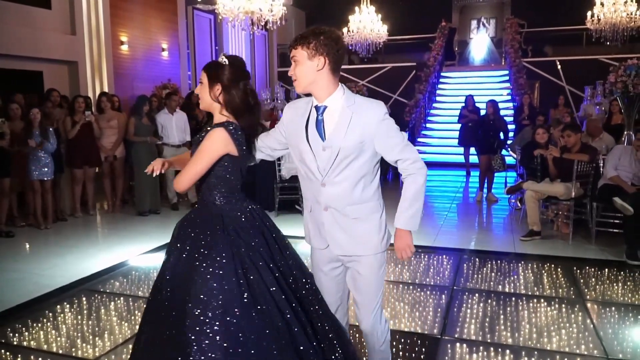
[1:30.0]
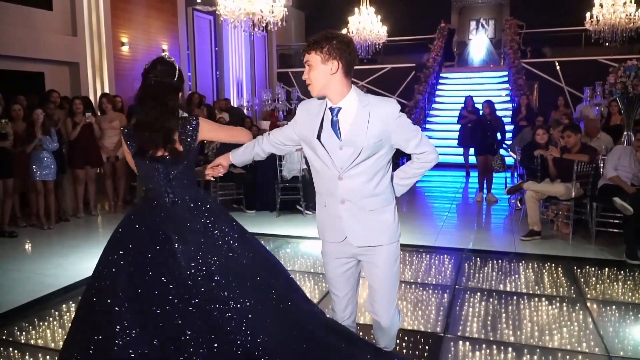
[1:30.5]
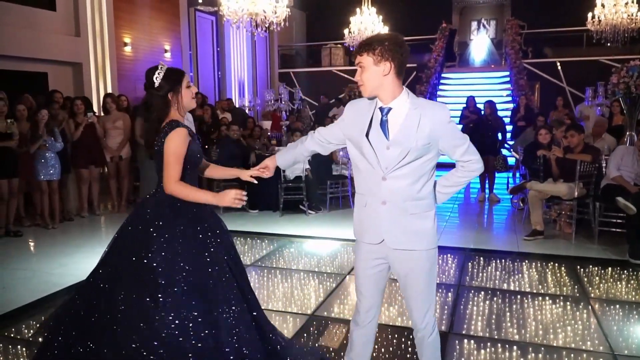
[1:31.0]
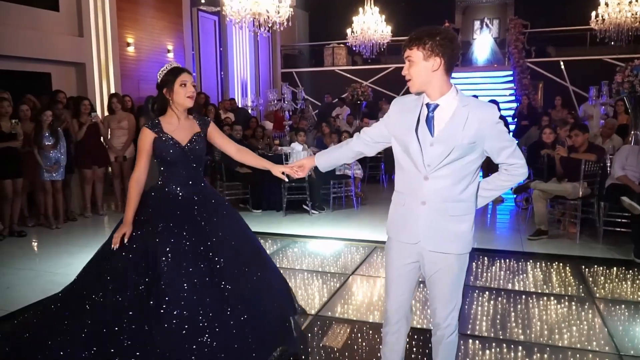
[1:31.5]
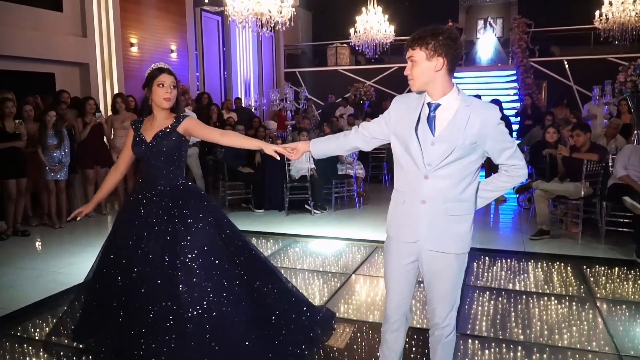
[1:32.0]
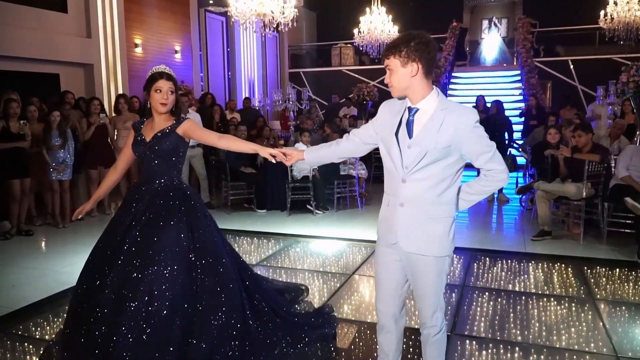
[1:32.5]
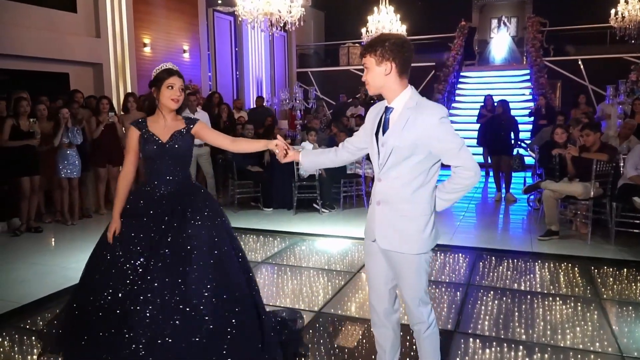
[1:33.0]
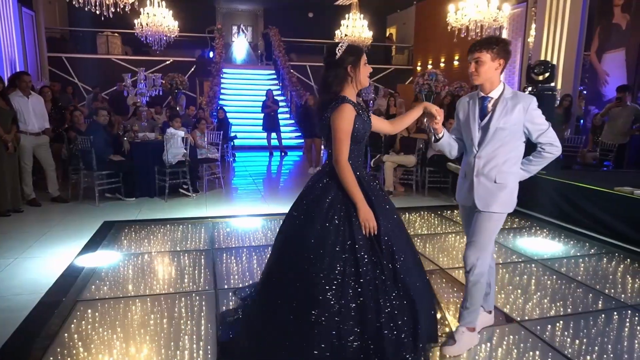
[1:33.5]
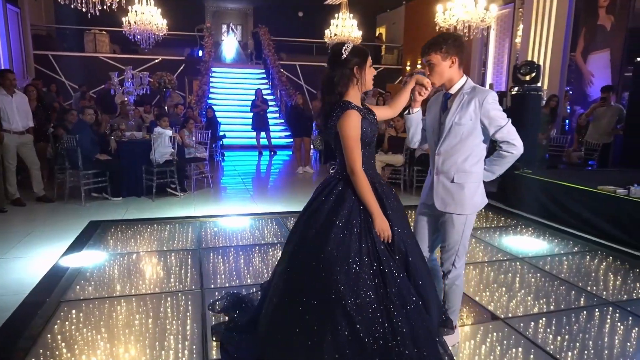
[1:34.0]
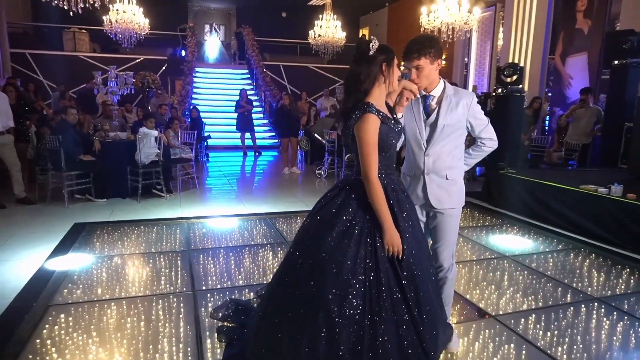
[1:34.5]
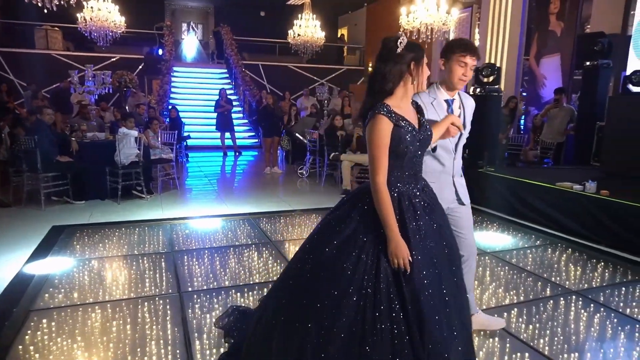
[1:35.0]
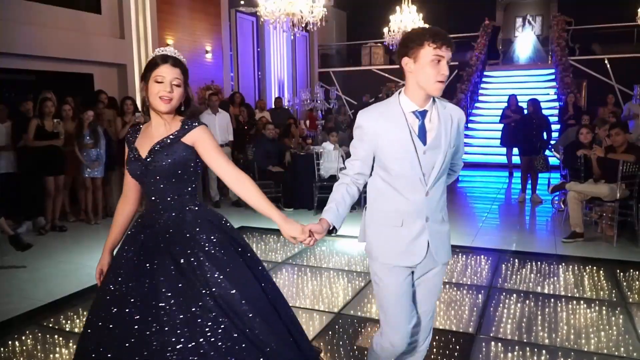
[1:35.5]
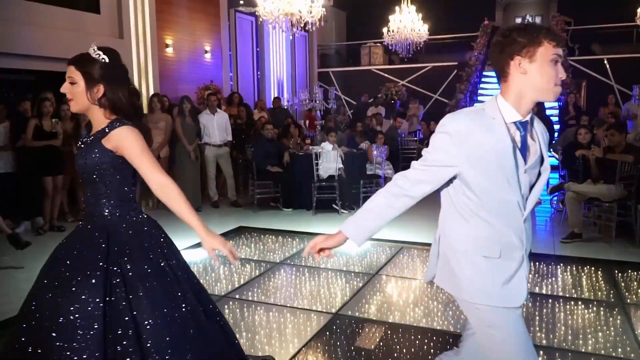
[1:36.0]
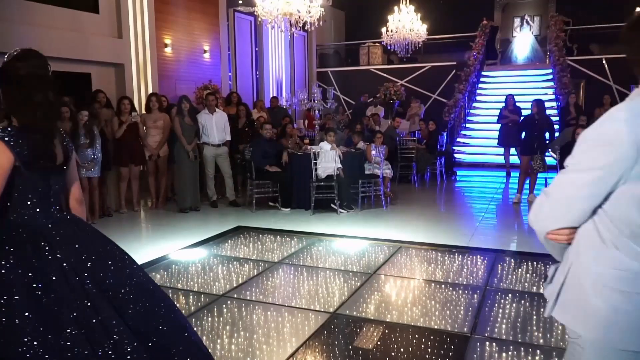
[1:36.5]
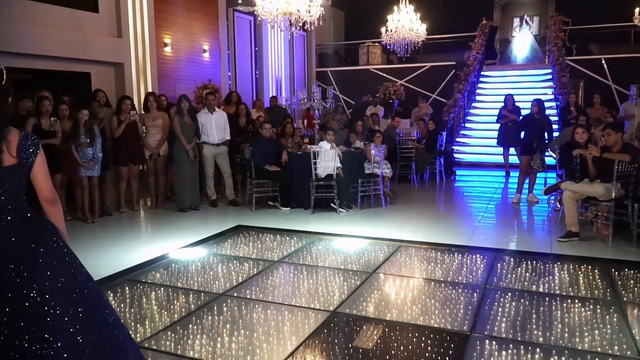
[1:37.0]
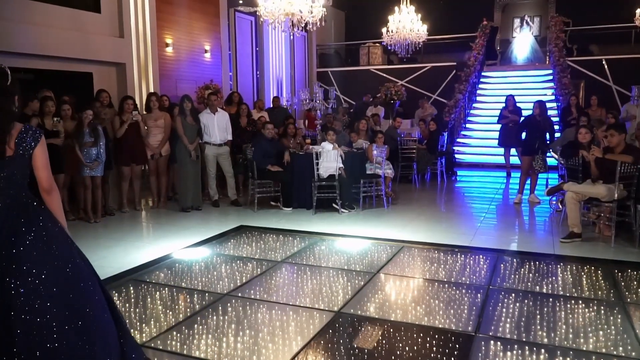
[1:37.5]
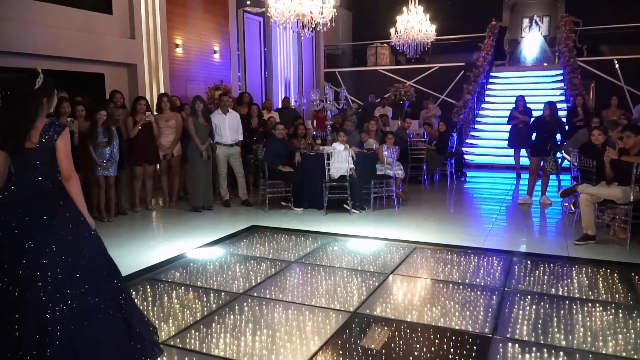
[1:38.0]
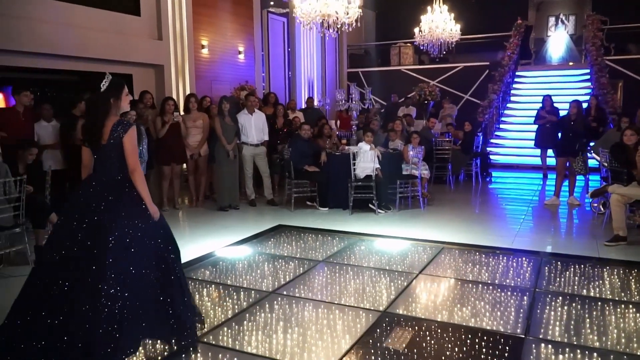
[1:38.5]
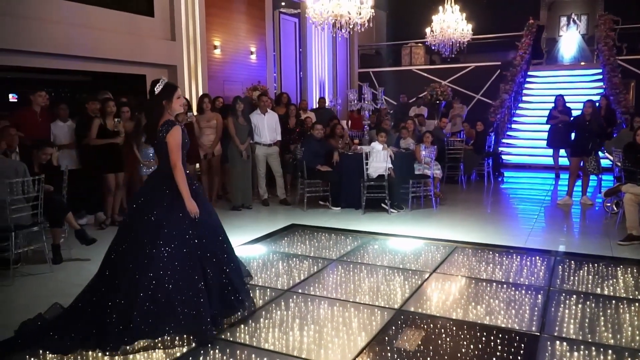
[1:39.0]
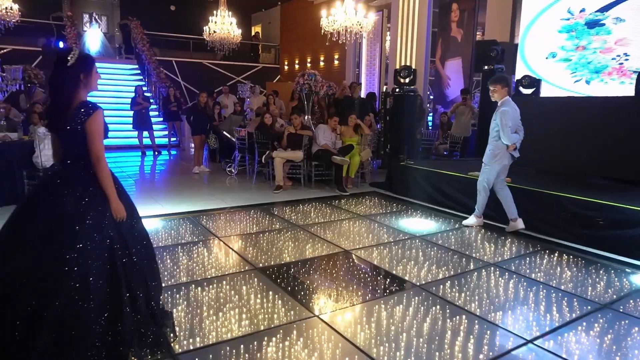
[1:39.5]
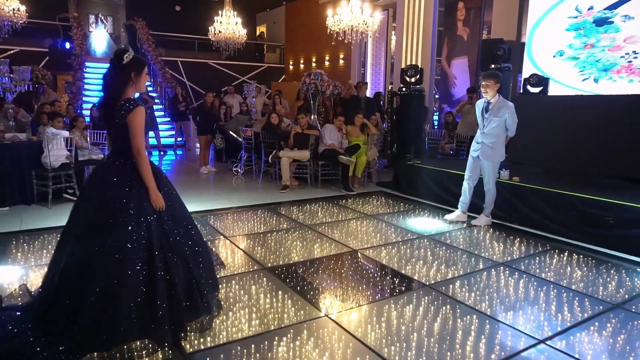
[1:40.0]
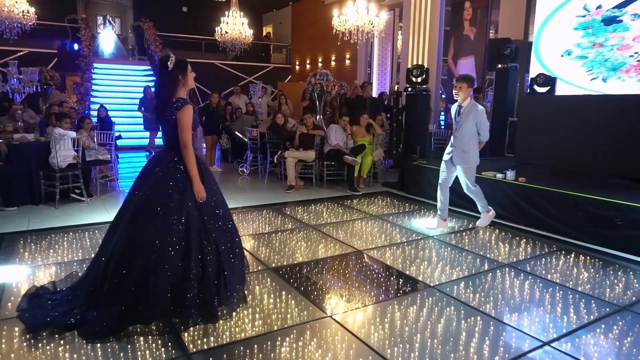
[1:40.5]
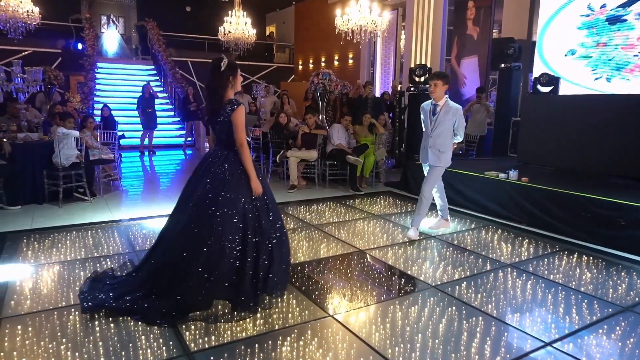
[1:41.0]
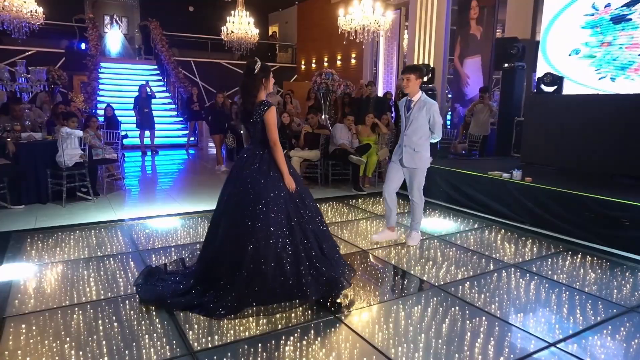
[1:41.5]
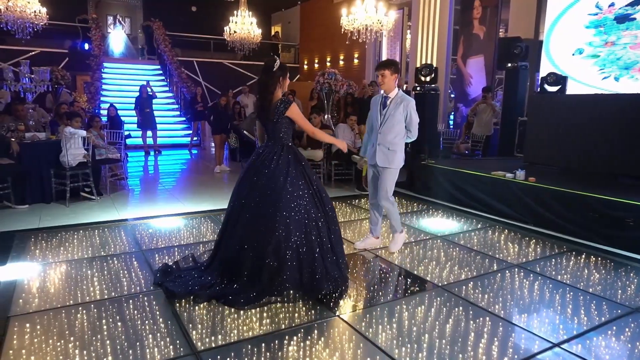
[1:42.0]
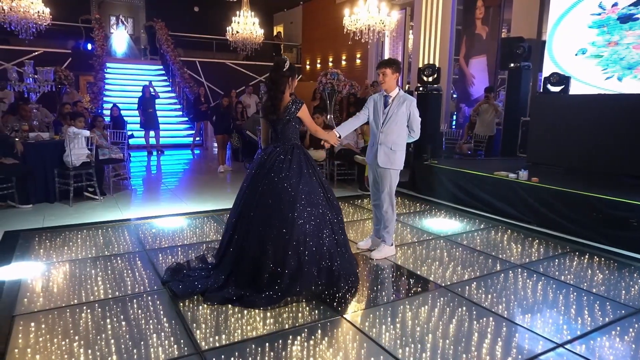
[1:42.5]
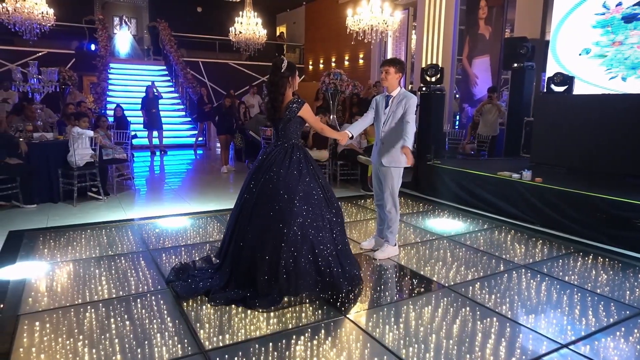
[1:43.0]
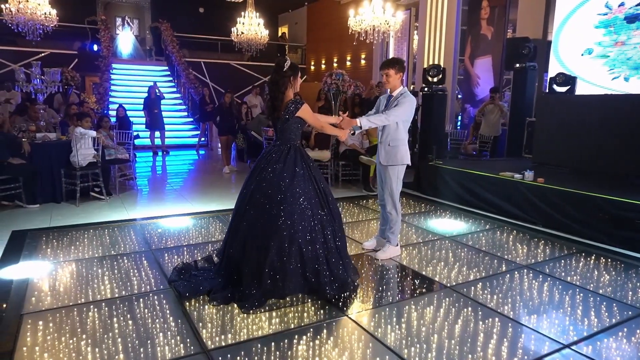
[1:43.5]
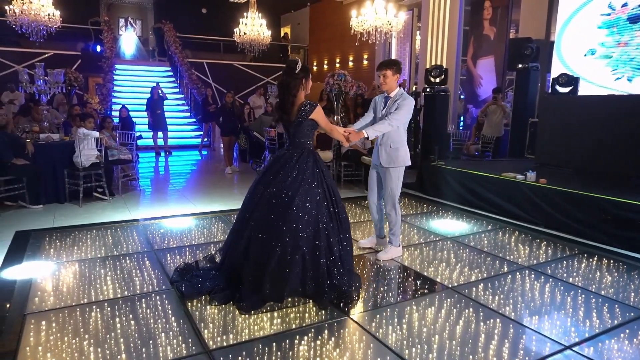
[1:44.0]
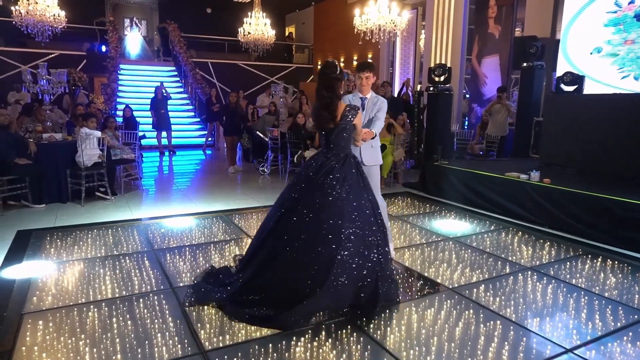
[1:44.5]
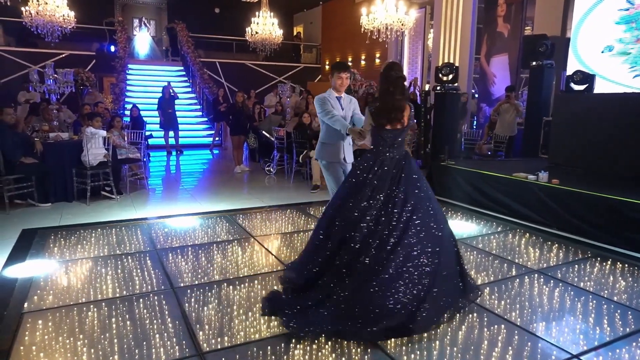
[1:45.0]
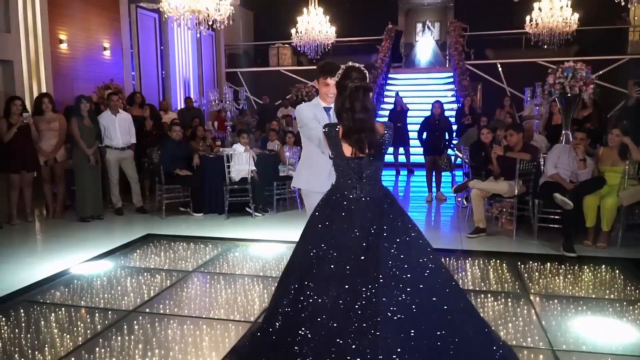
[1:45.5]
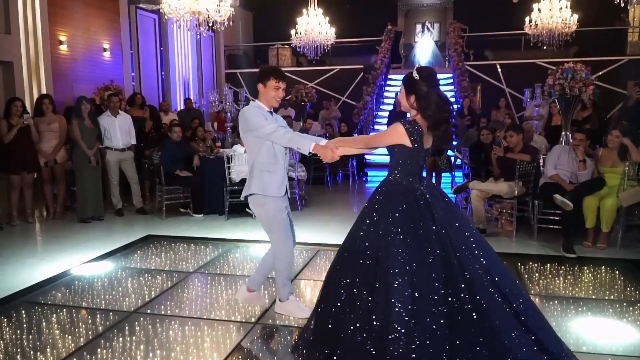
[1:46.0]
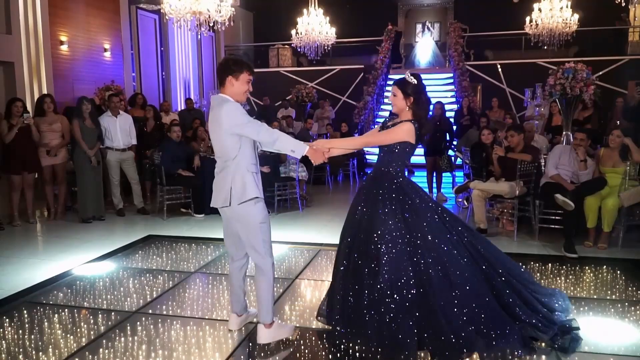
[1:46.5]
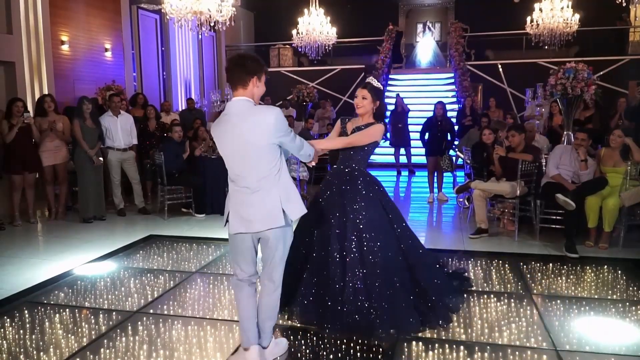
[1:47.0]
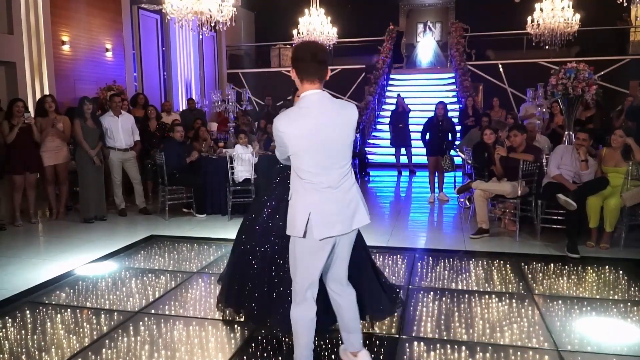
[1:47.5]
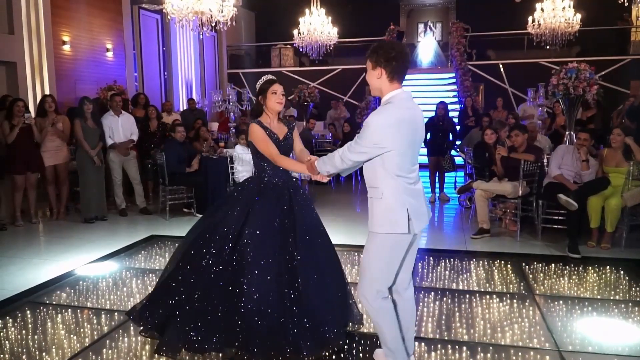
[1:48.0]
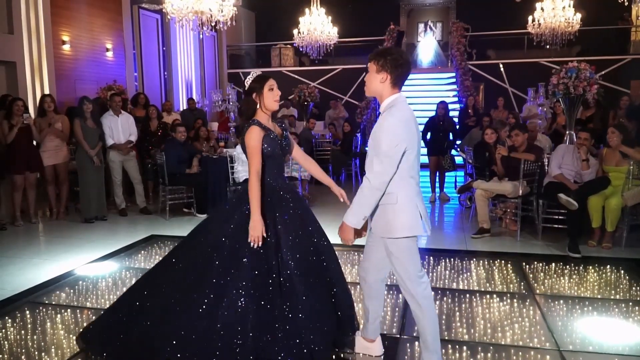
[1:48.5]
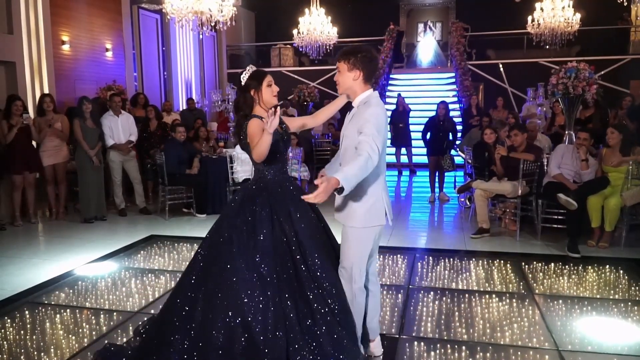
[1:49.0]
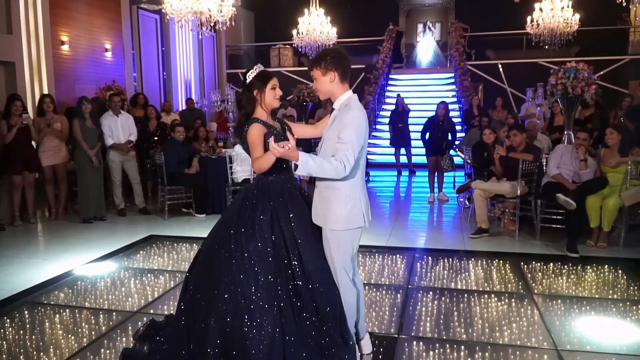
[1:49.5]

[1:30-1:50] The couple keeps dancing in the middle of the room. The boy moves closer to the girl and kisses her hand, then they separate to either side of the stage, come back together, hold hands, and move slowly in circles around each other. The people in the room look on, and some seem to be mildly cheering and encouraging them from the side. They are in a large or medium-sized ballroom, on a custom stage lit from beneath, with several dozen people around them. Chandeliers hang from the ceiling.